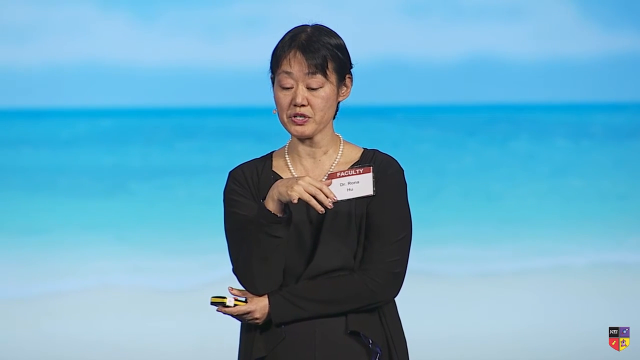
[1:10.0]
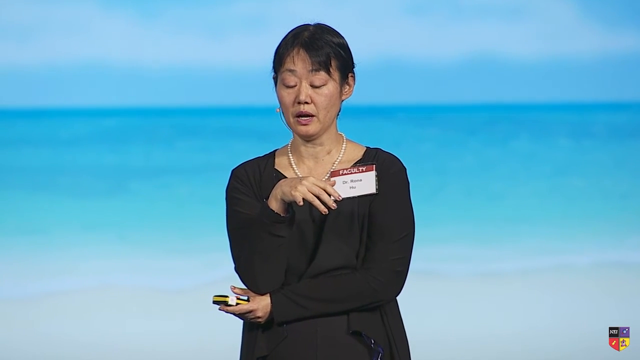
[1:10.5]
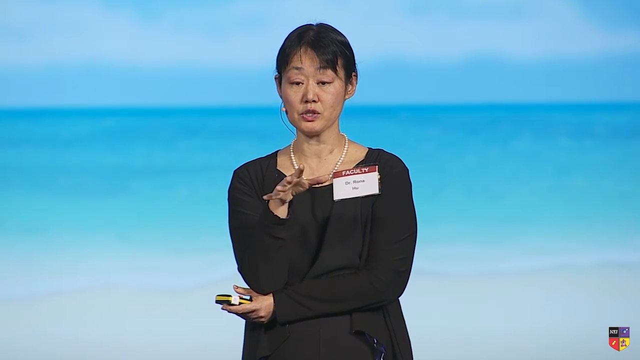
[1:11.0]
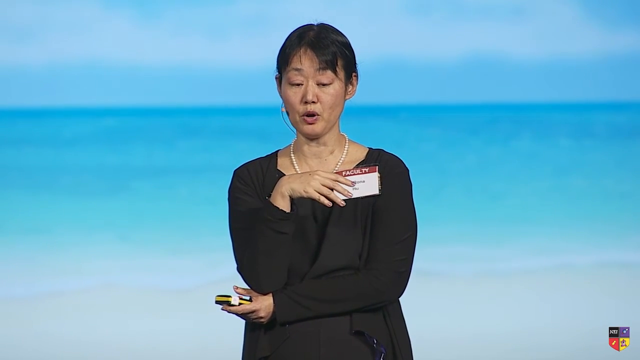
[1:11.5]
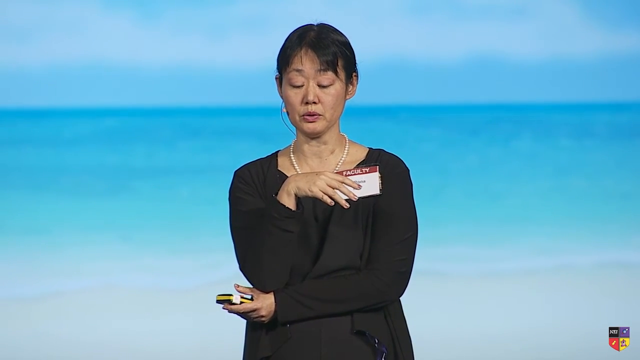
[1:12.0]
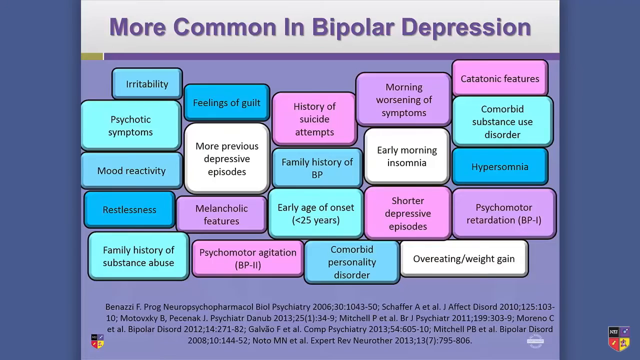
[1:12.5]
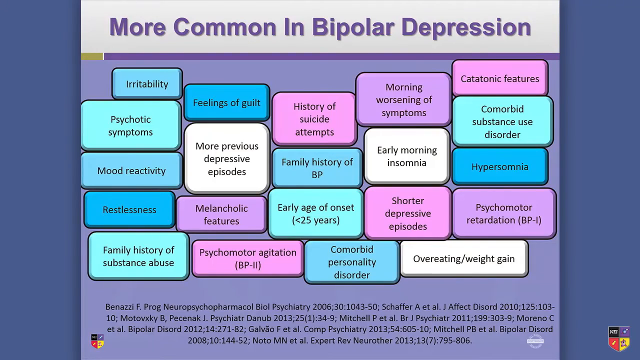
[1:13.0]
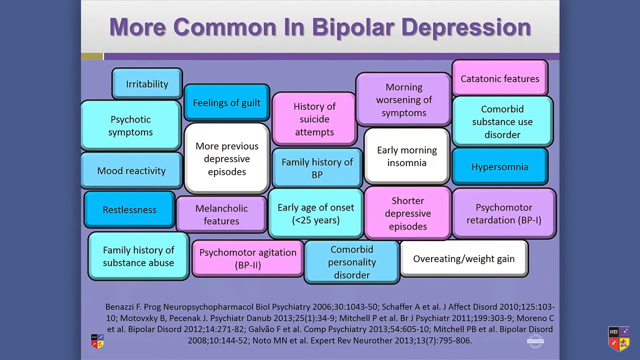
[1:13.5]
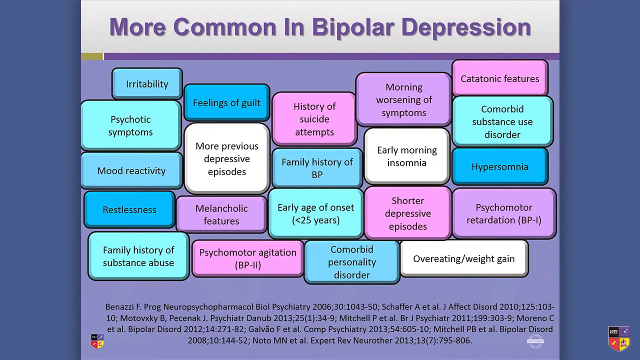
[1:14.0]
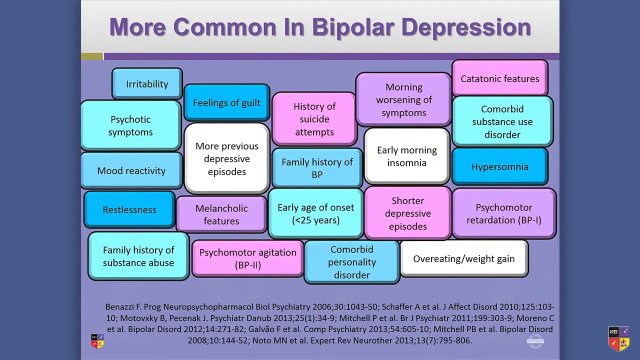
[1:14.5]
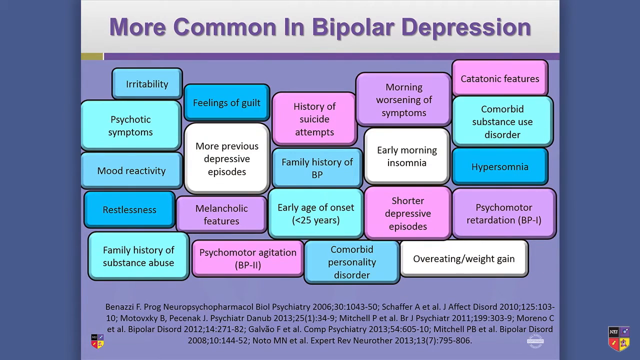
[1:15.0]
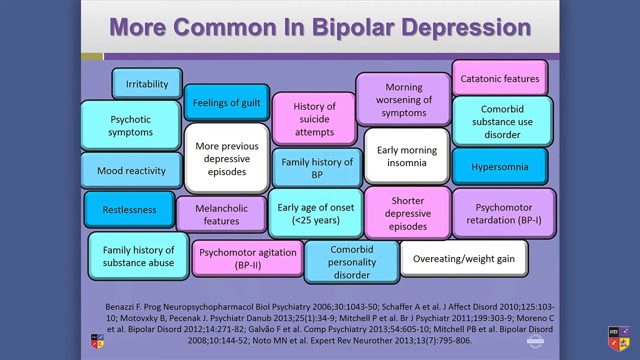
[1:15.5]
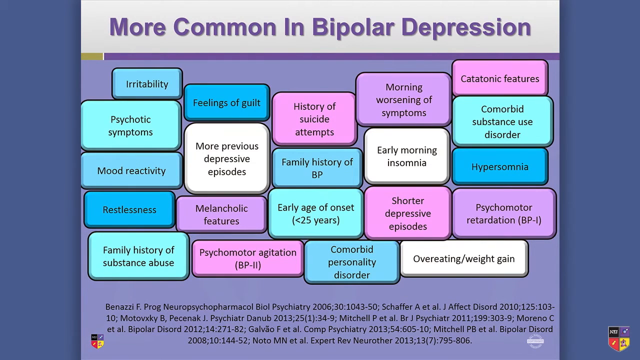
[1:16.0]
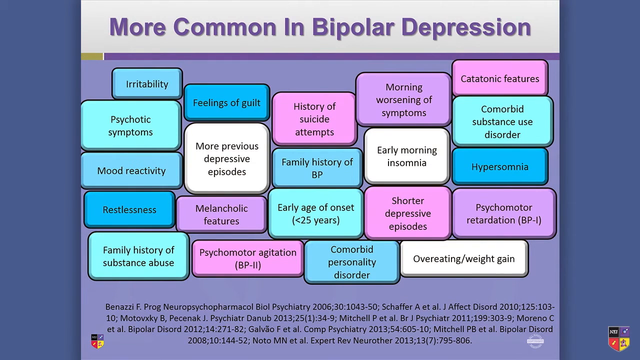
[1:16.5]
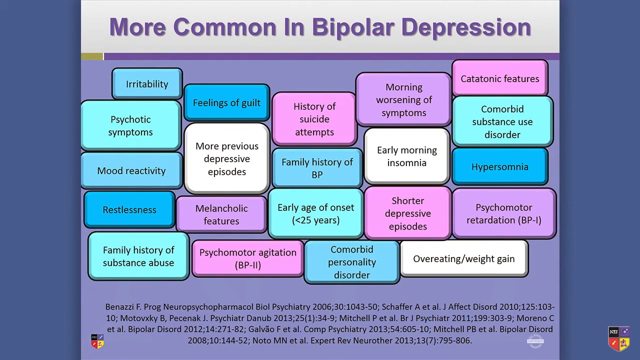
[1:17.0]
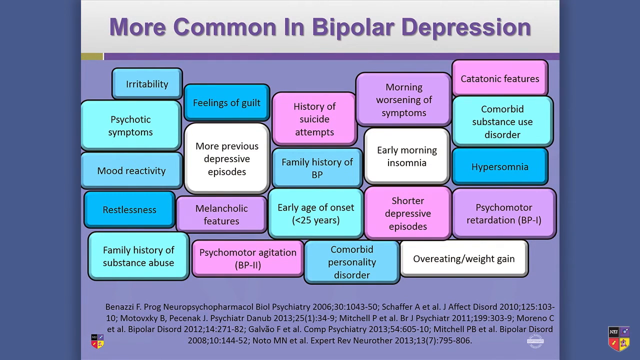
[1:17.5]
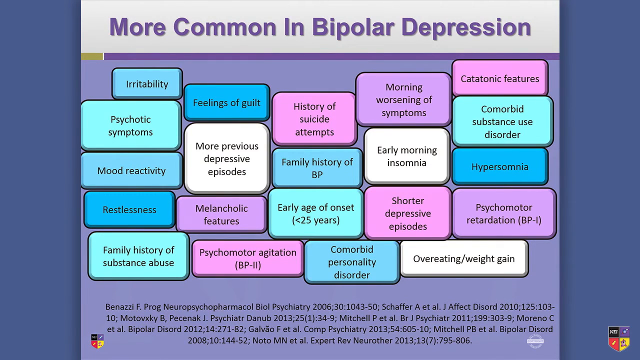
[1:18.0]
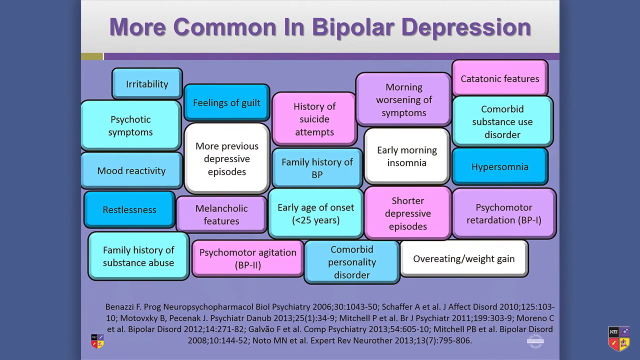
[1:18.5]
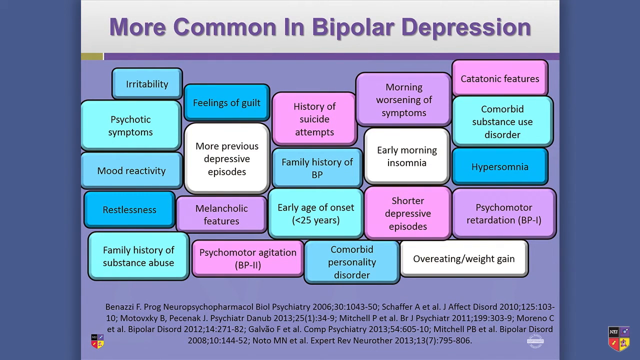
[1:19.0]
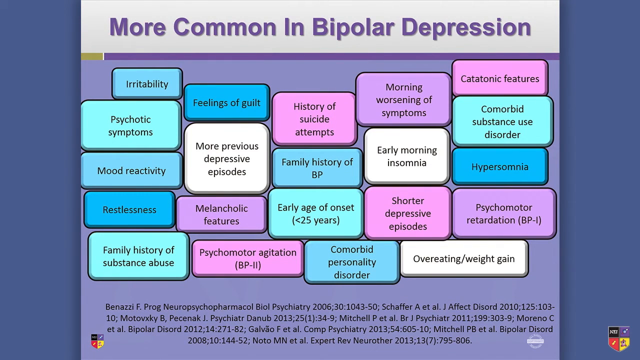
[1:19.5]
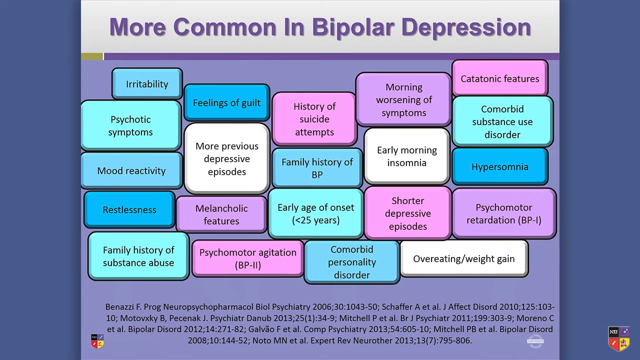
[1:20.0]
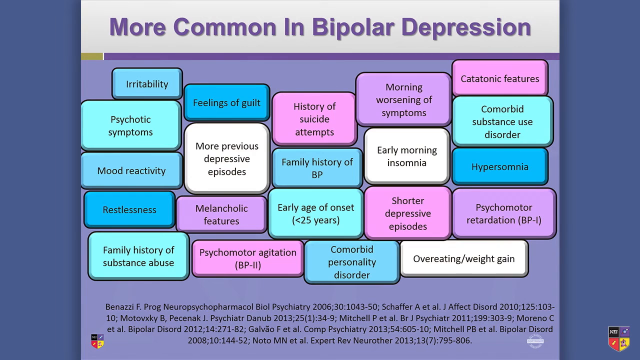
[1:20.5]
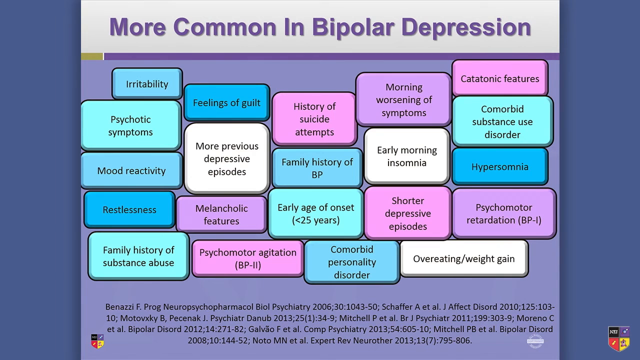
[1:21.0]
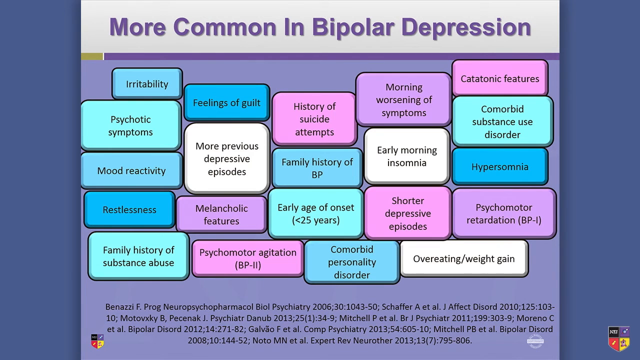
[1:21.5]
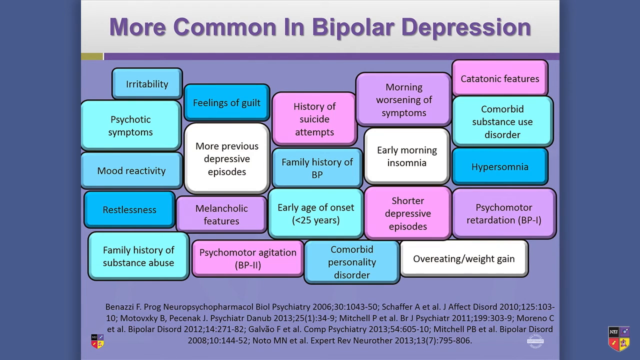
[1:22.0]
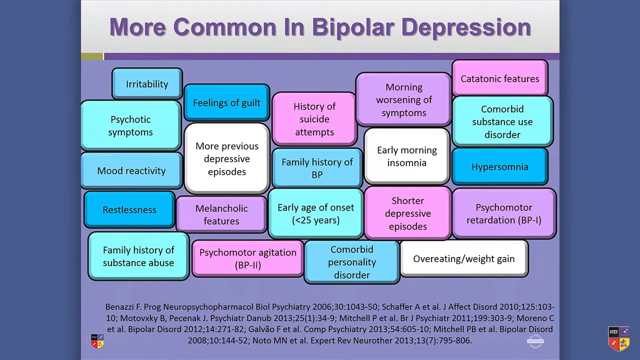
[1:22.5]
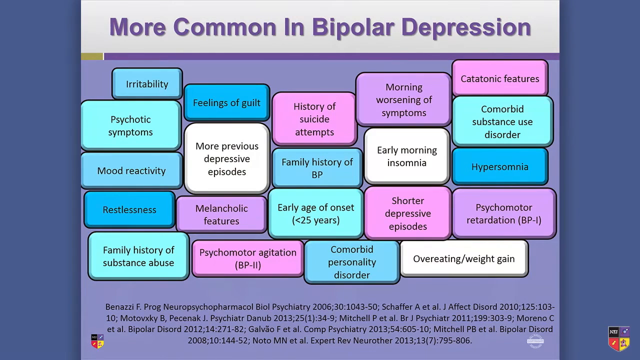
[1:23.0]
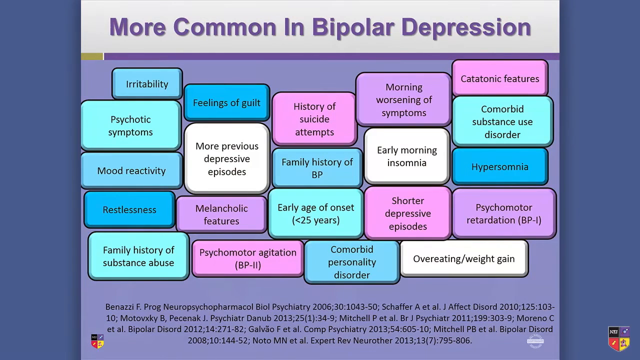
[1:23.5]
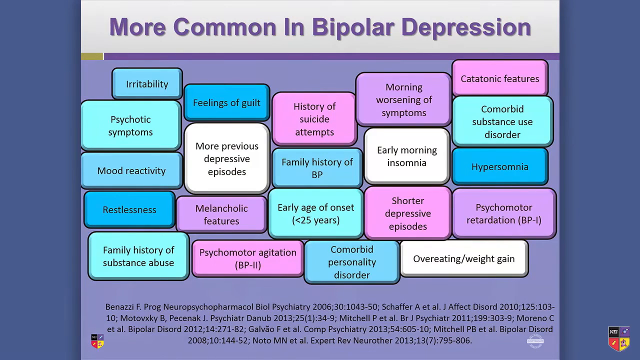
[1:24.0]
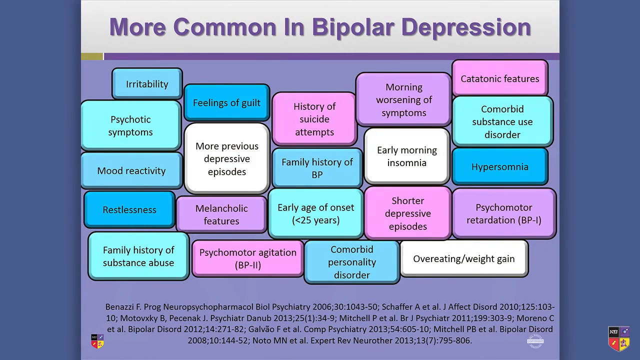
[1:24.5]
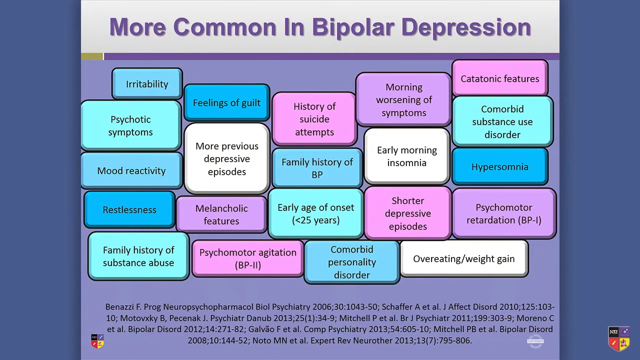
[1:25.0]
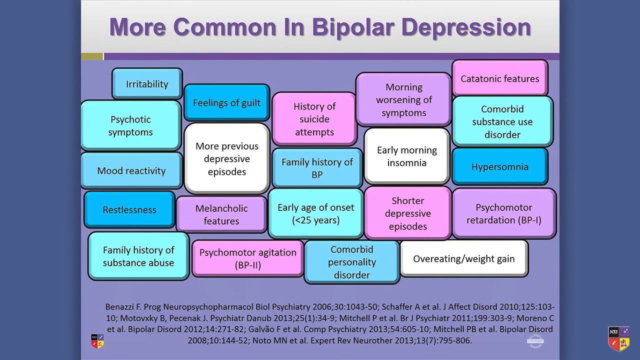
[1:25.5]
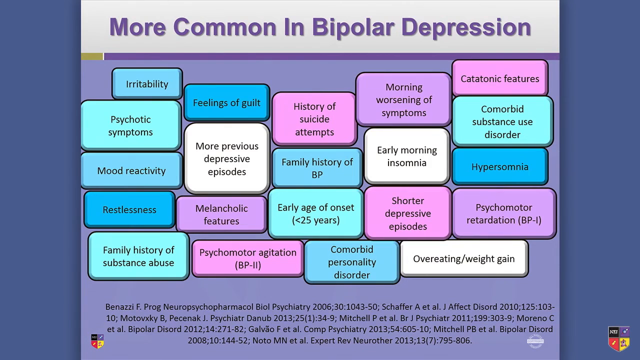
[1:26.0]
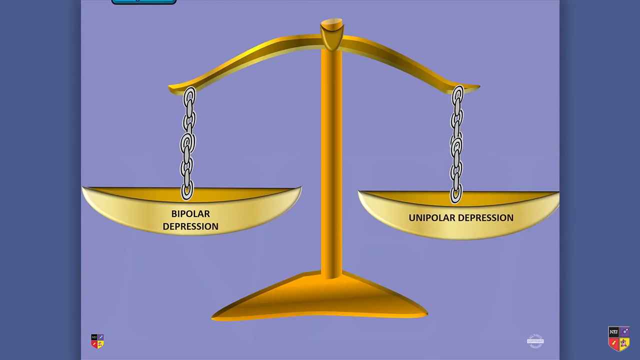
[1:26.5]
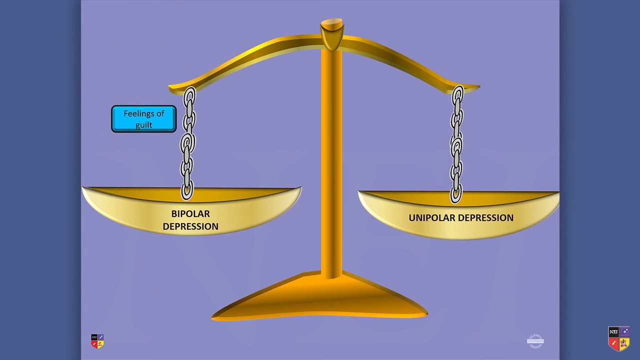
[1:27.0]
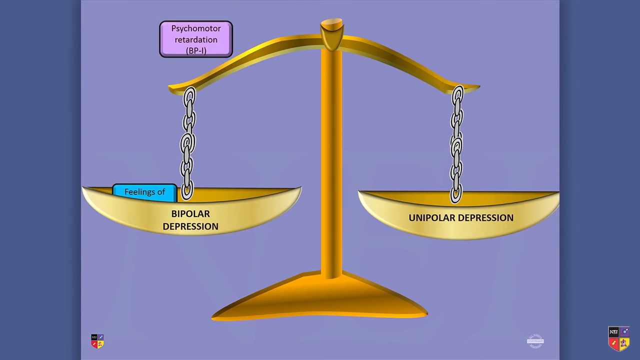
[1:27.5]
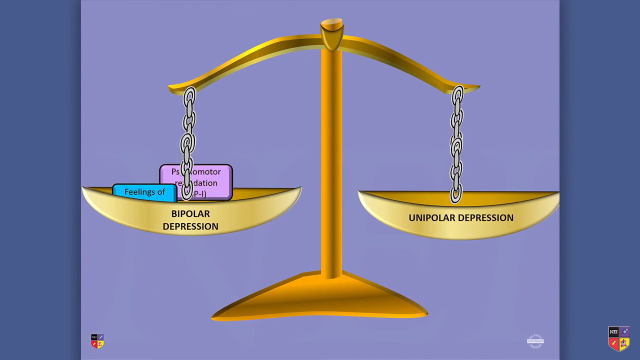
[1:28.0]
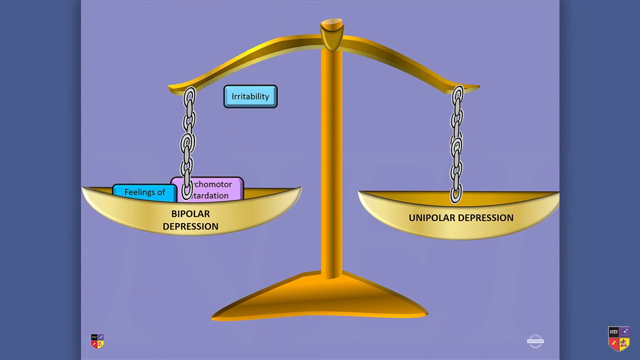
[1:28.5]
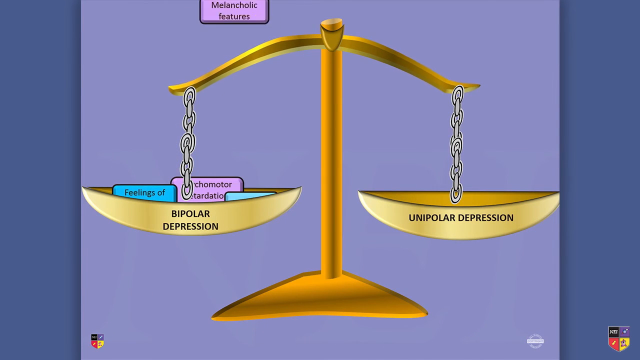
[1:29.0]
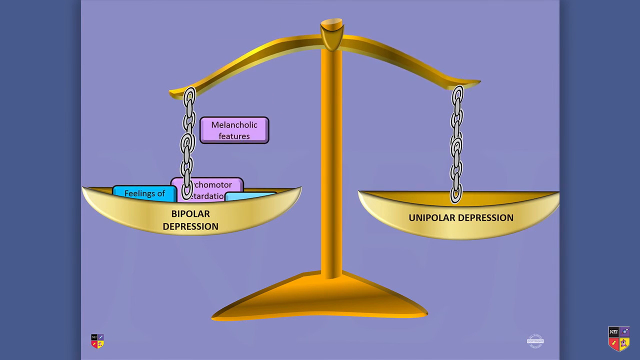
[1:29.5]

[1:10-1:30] An Asian woman with black hair is speaking. Her name tag is red at the top and white at the bottom; it appears to say something like "Facilities TV," with her name below it in white. She appears to wear a black long-sleeve shirt that possibly goes down to a dress. She is holding what looks like a presentation clicker for moving from one slide to the next. A slide then comes up about what is more common in bipolar depression, listing irritability, feeling of guilt, family history of bipolar, early age of onset (apparently greater than 25), family history of substance abuse, mood swings, restlessness, psychiatric symptoms, early morning insomnia, shorter depressive episodes, and overeating or weight gain. The items are kind of in boxes, all in different colors, grouped together. Next, a weight scale appears, with bipolar depression on one side and unipolar depression on the other, and certain things go into the bipolar depression side before it stops.